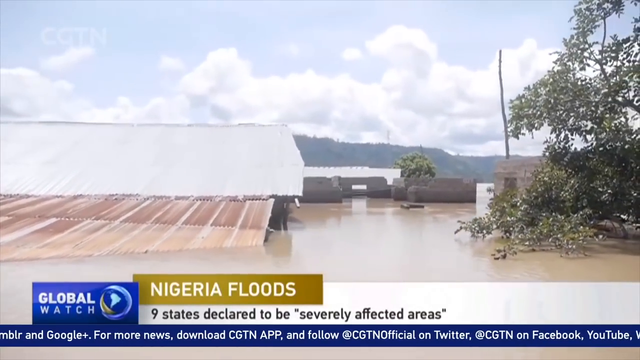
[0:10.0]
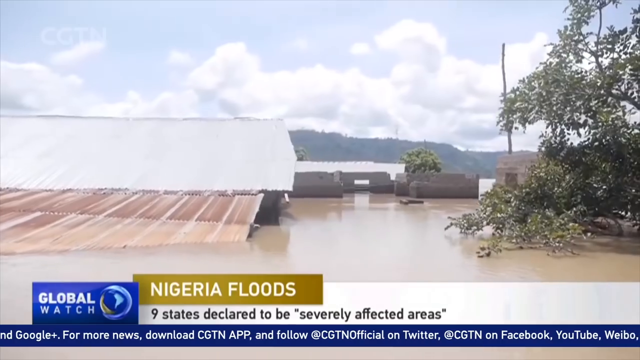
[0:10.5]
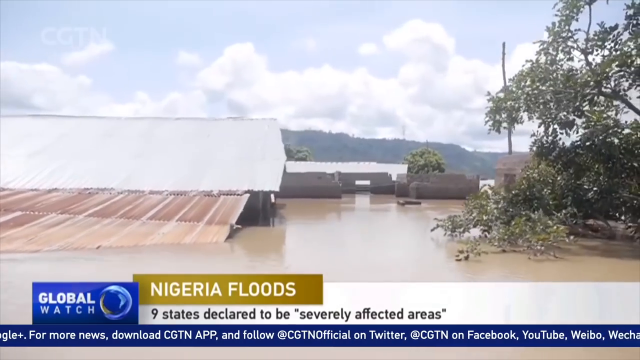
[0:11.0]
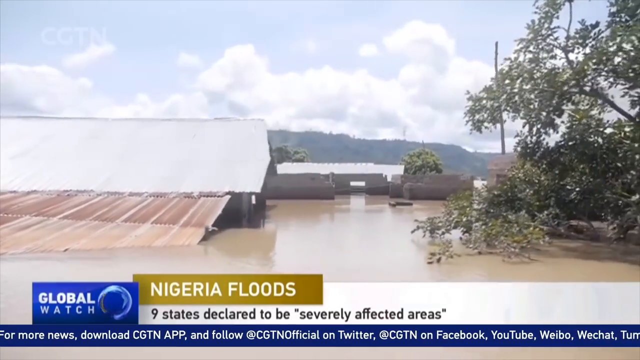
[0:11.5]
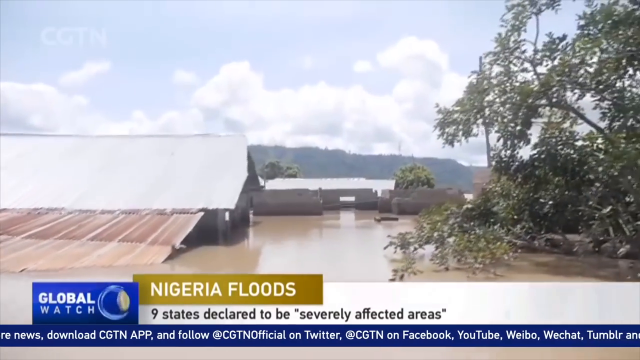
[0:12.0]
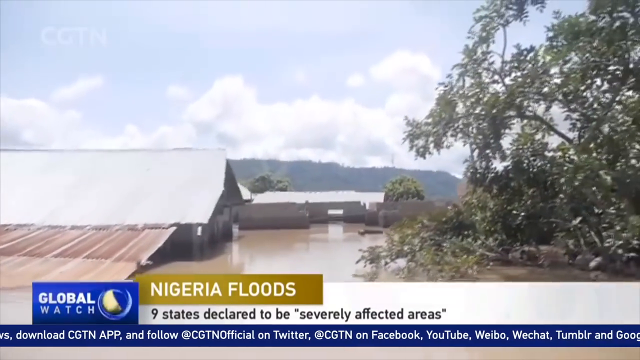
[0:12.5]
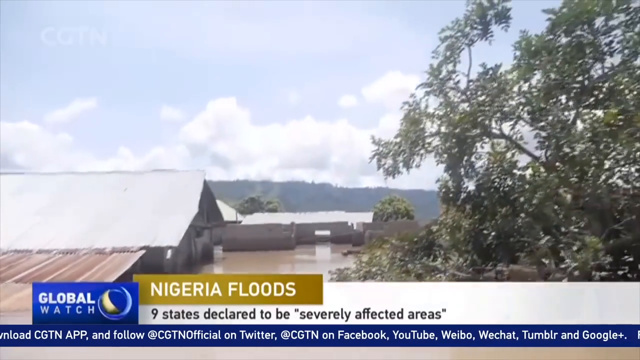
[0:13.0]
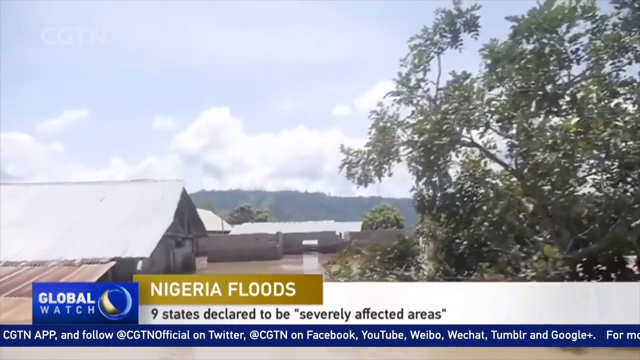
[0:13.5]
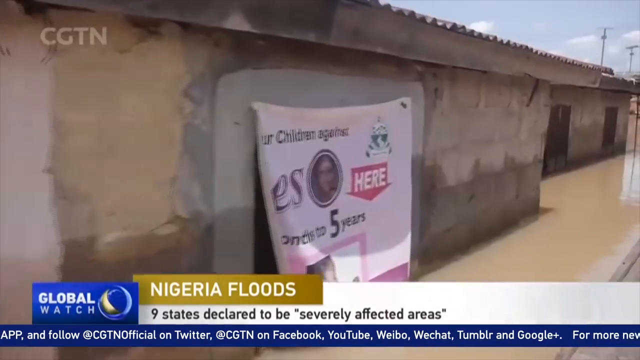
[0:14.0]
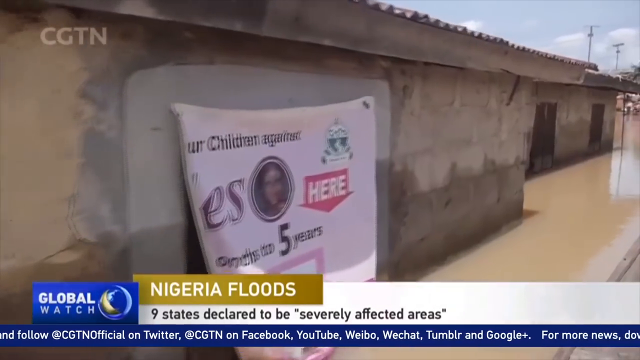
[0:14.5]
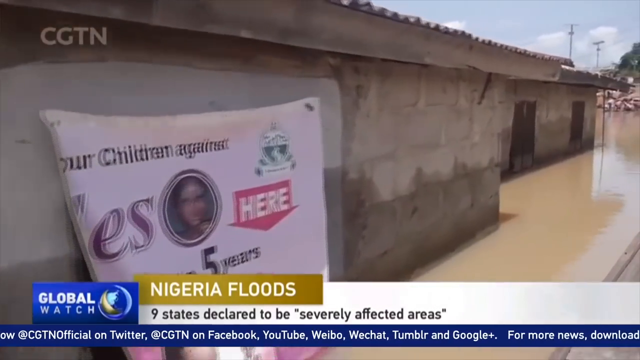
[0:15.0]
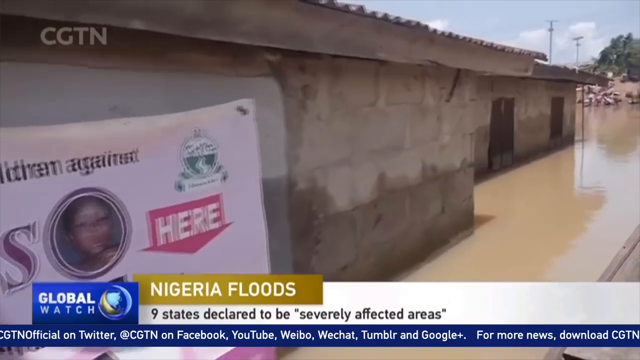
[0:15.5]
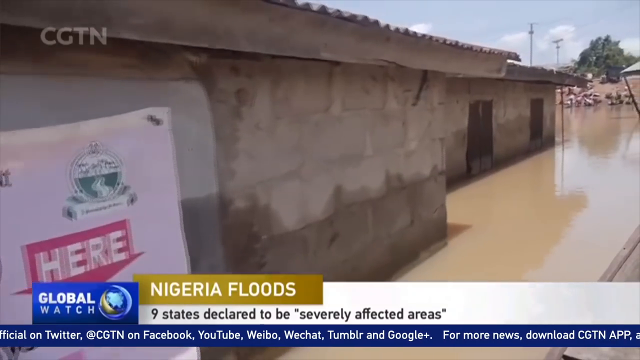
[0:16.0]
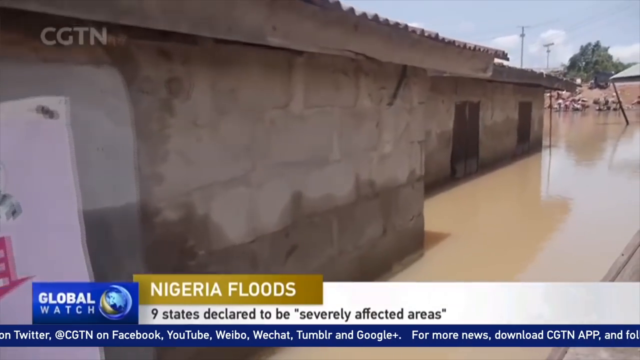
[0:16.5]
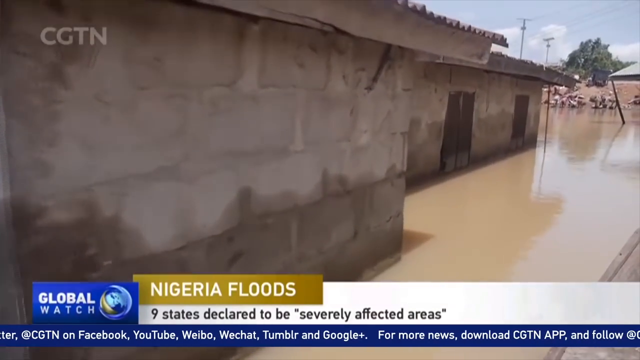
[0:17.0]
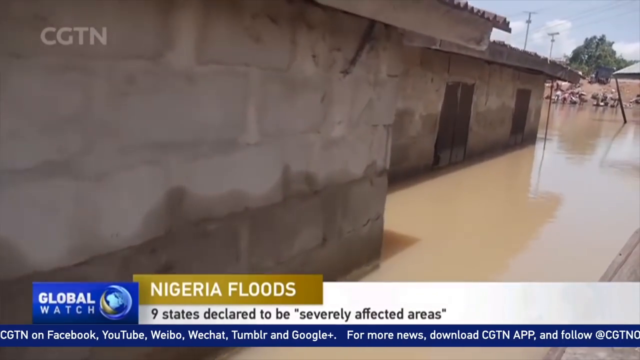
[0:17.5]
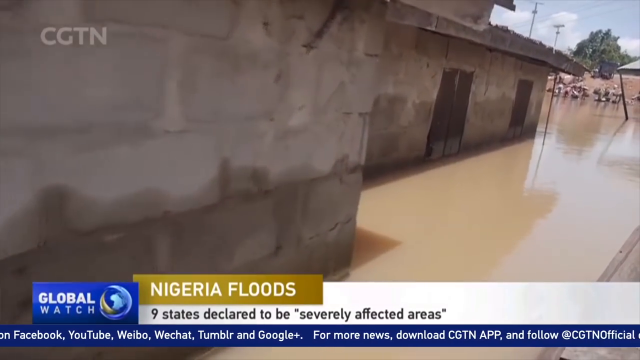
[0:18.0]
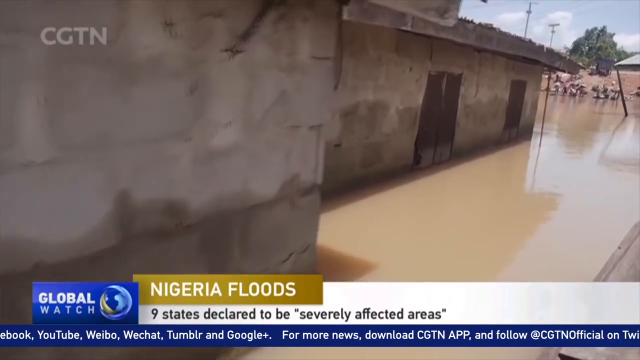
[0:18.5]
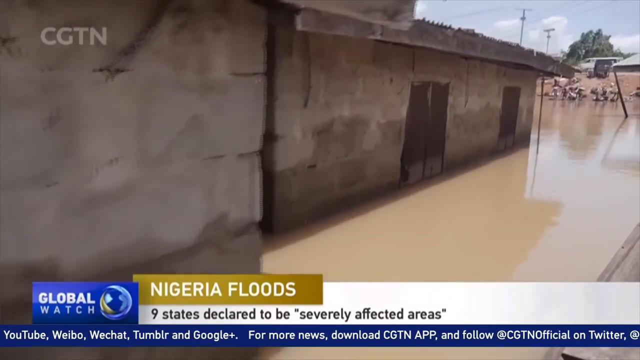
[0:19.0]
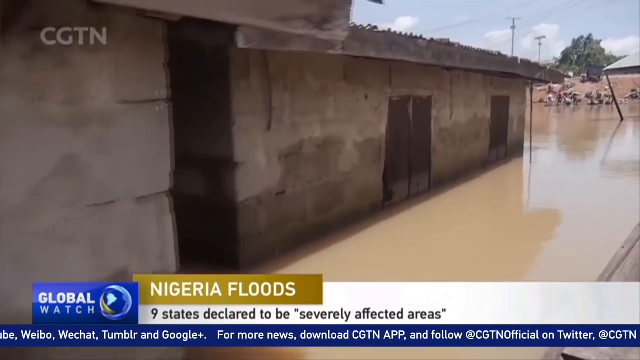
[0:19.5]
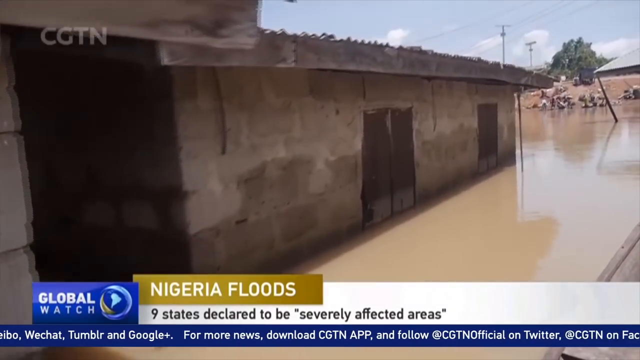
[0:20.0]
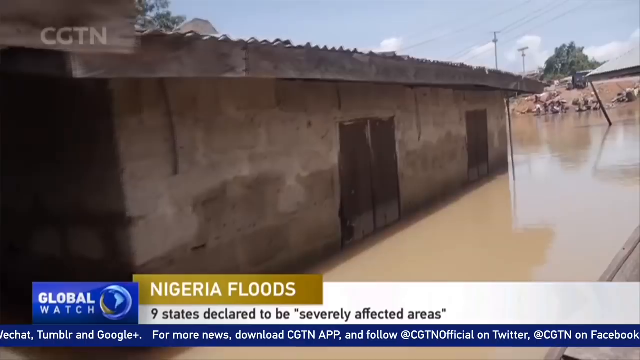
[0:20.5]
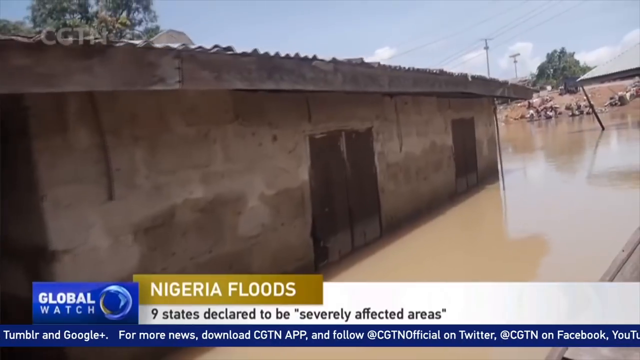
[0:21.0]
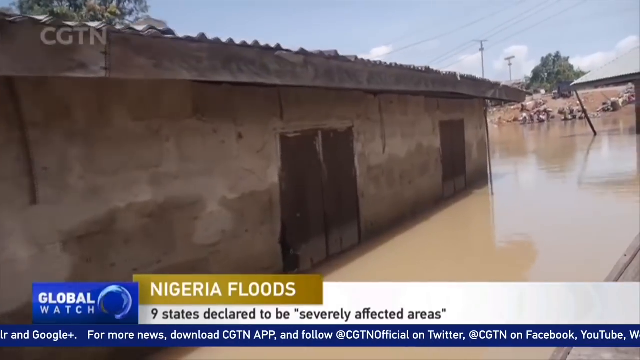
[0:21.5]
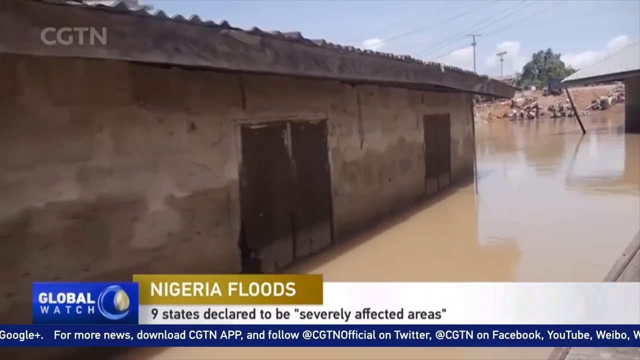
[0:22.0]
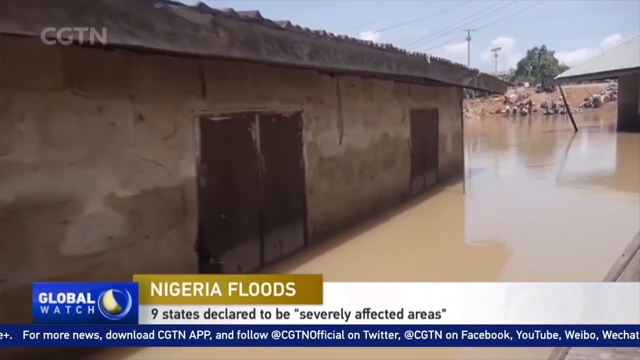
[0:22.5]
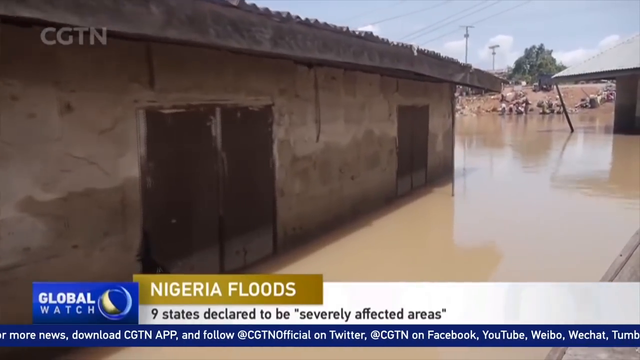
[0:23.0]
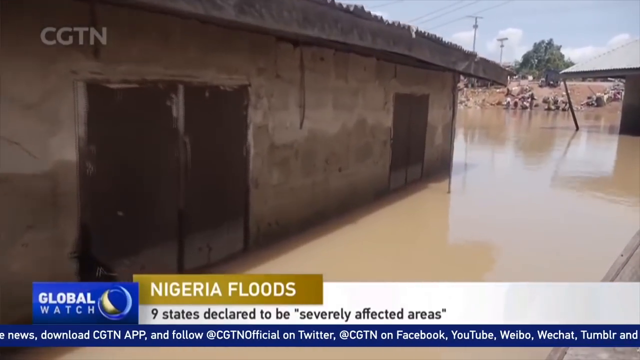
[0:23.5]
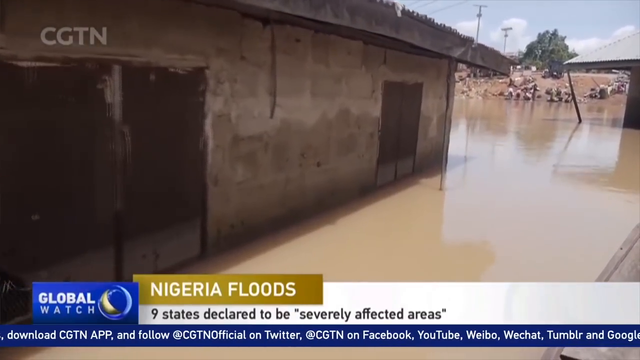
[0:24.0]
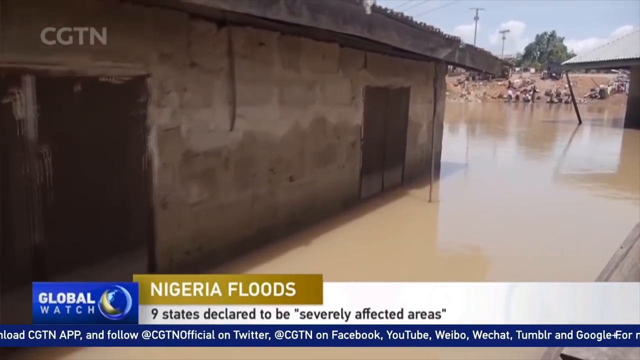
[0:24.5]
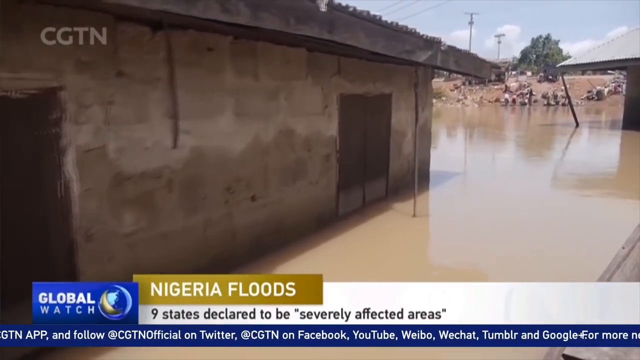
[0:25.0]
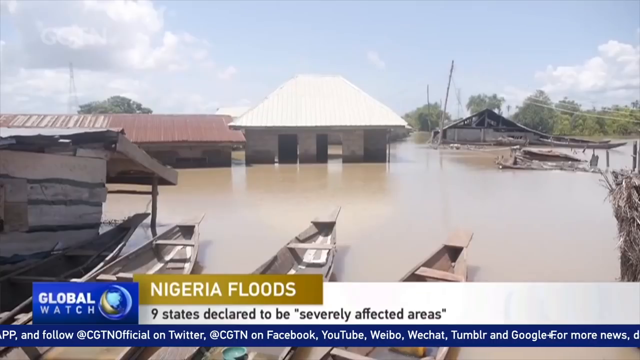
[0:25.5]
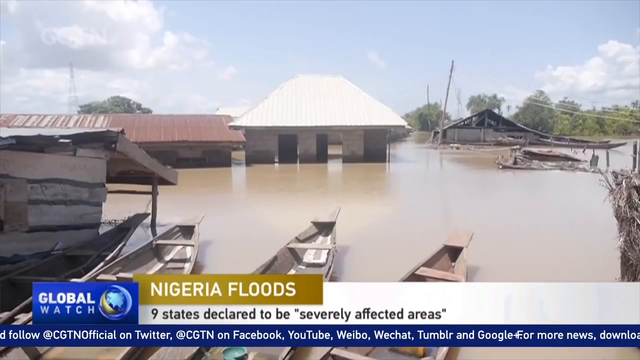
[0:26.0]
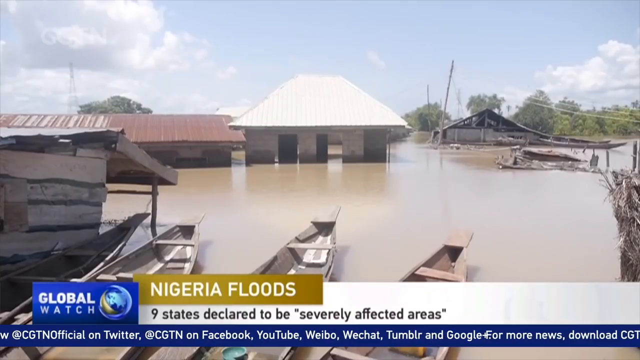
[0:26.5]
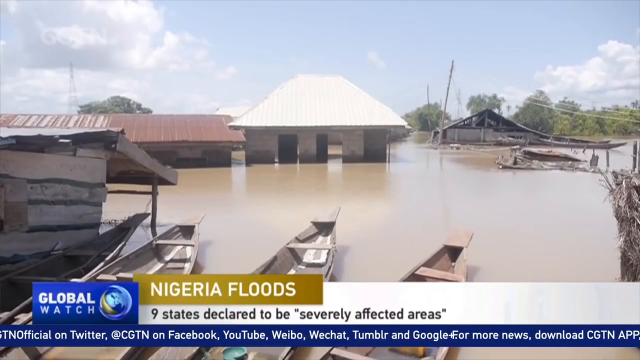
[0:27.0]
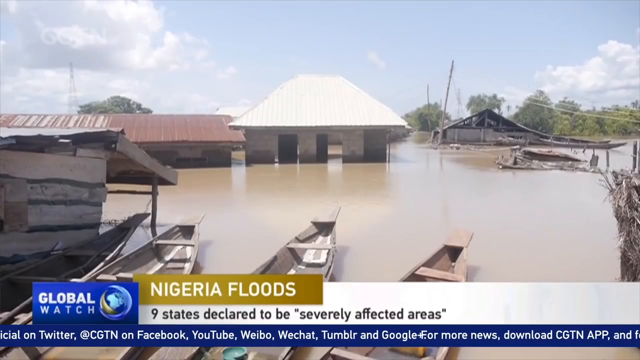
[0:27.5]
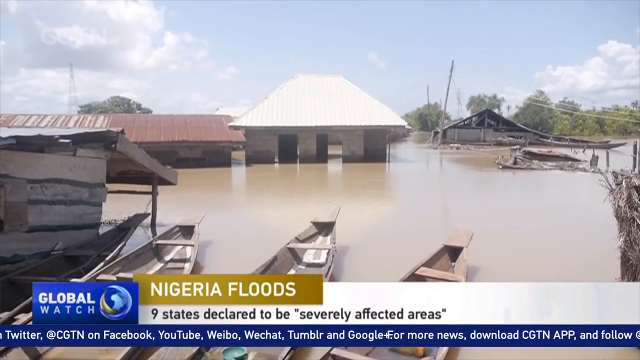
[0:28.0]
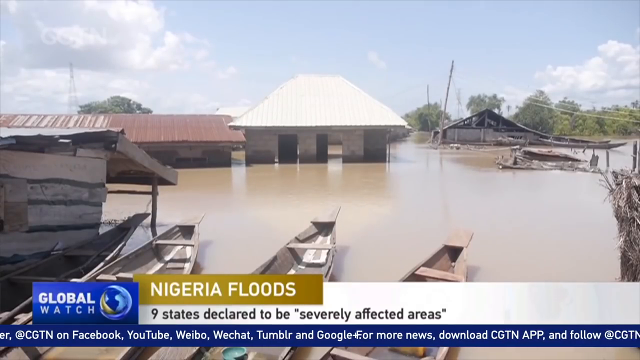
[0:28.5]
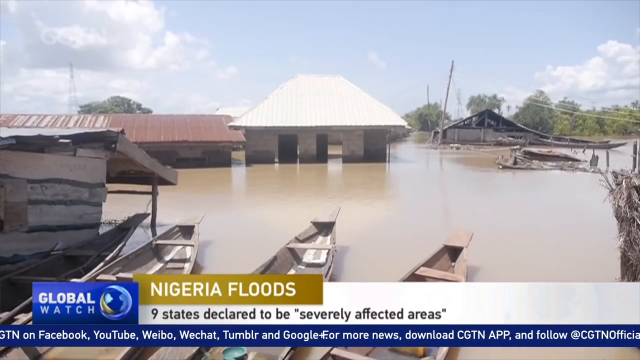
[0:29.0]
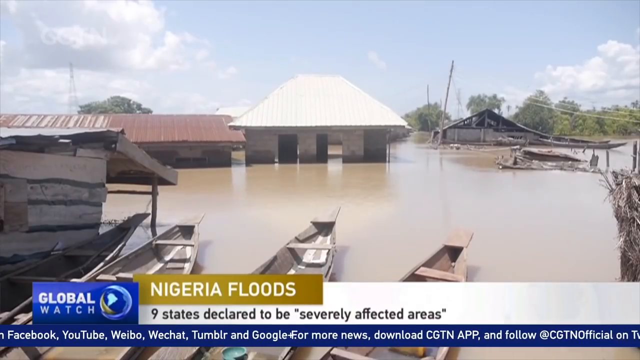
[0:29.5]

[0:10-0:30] Floodwater covers a house and reaches the tops of the trees, which are themselves submerged. Another shot shows a house with only its rooftop visible. In one area, houses show lines on their walls marking how high the water reached; the water level seems to have gone down, but the lines show it was once high. As the camera moves around the area, a lot of water still remains, and it appears too deep to walk through.